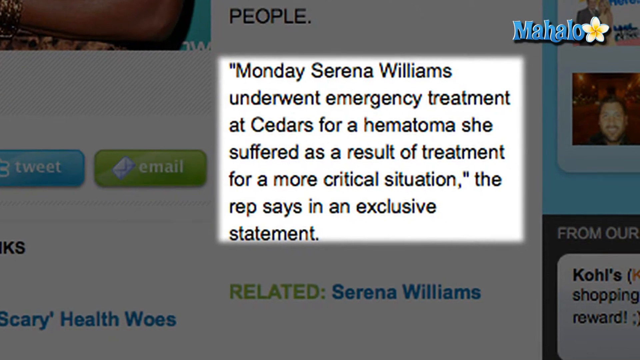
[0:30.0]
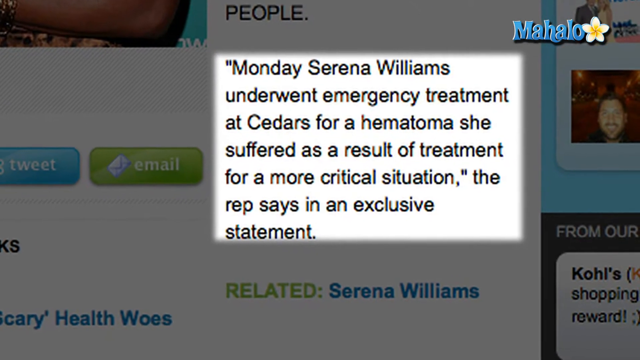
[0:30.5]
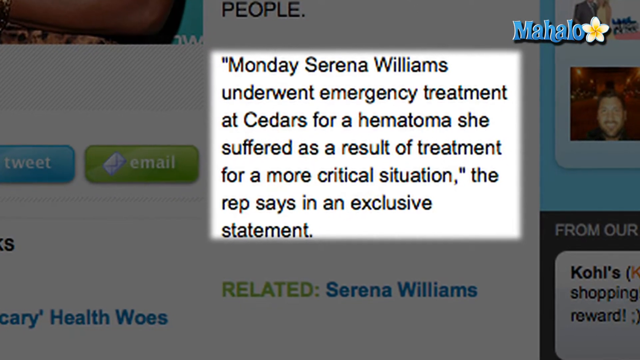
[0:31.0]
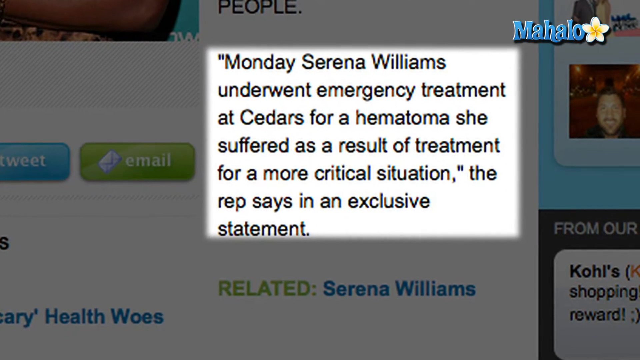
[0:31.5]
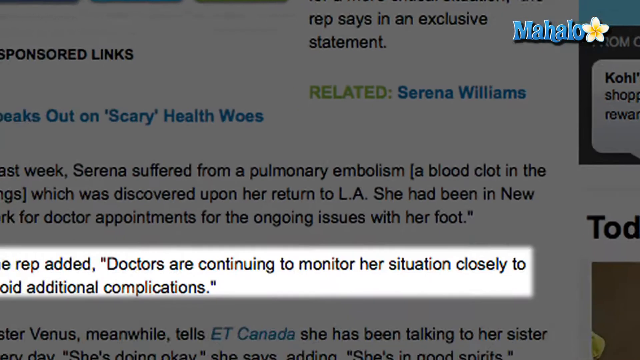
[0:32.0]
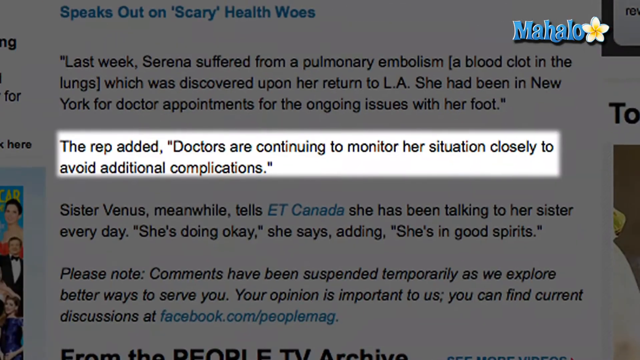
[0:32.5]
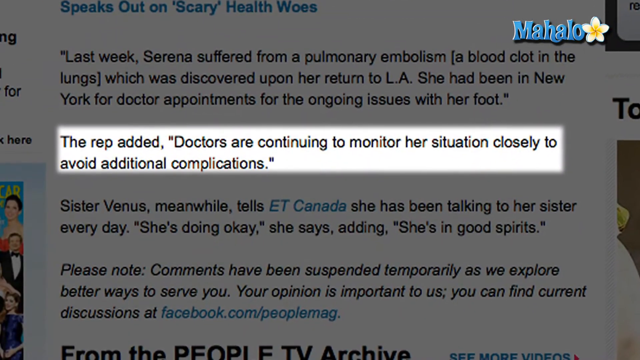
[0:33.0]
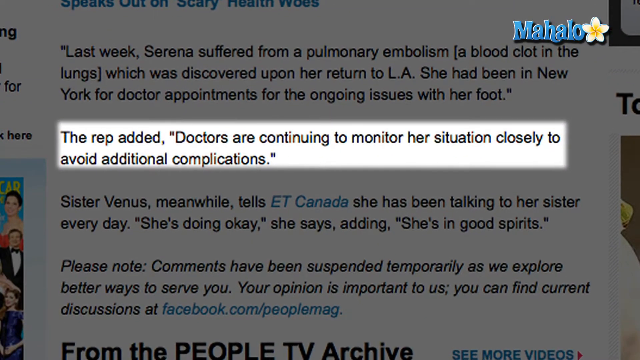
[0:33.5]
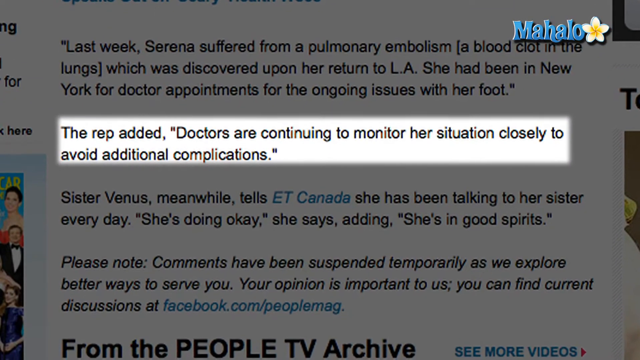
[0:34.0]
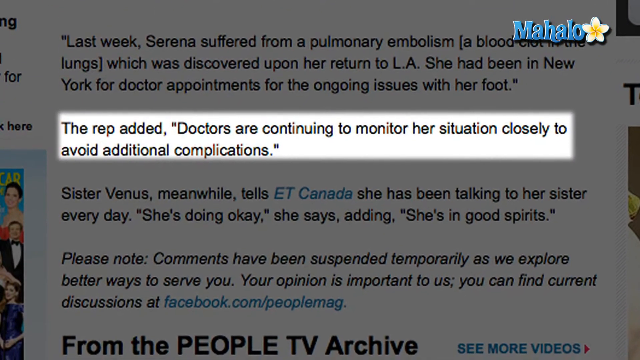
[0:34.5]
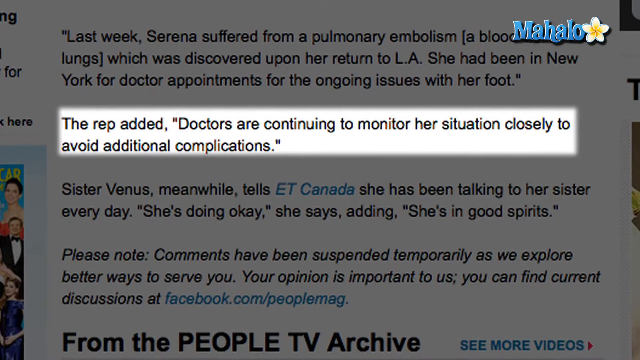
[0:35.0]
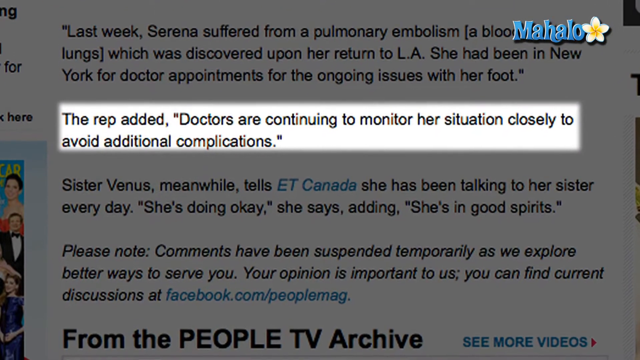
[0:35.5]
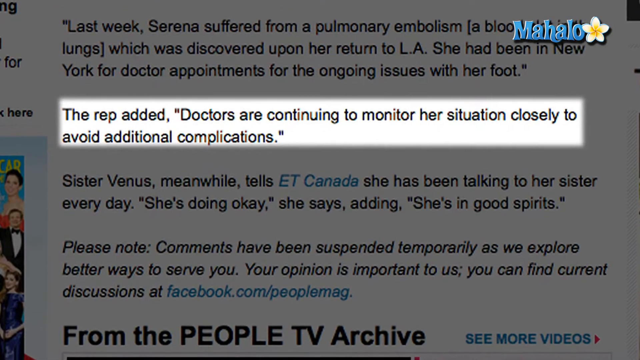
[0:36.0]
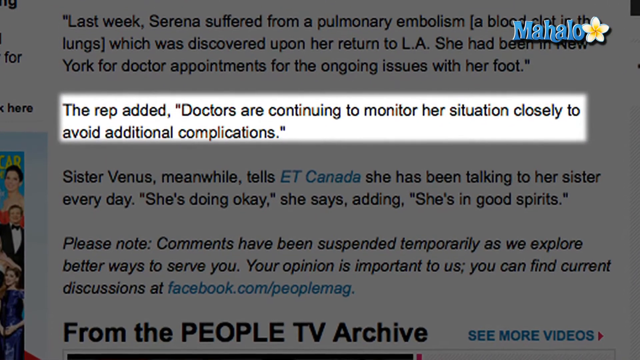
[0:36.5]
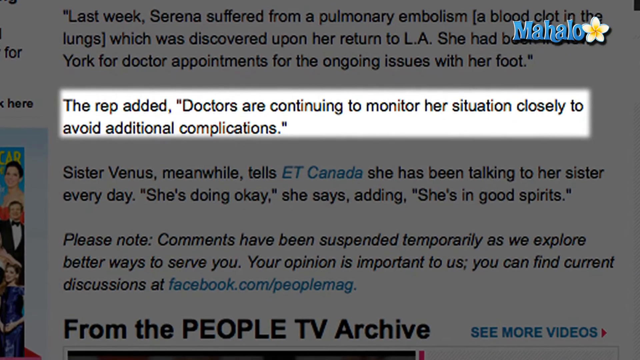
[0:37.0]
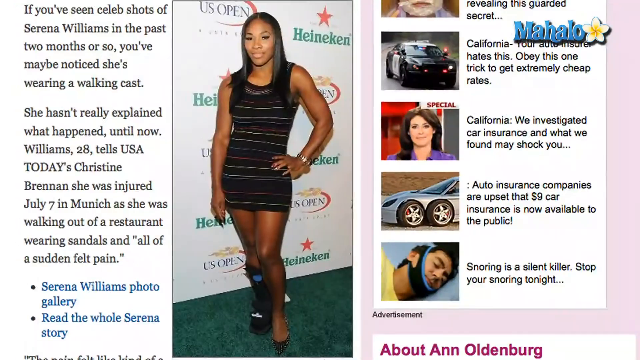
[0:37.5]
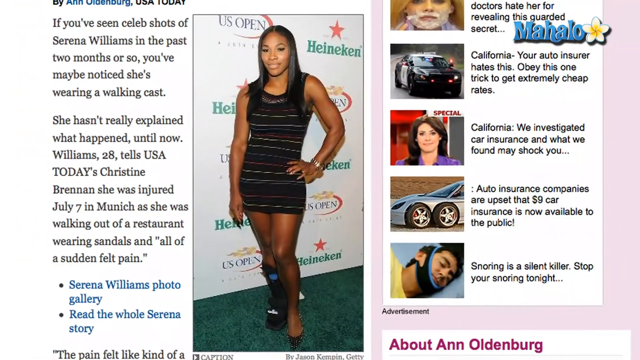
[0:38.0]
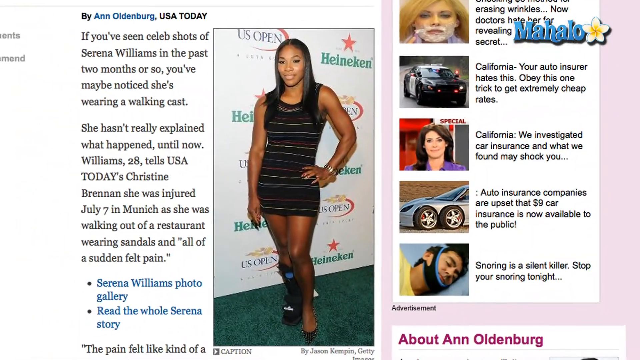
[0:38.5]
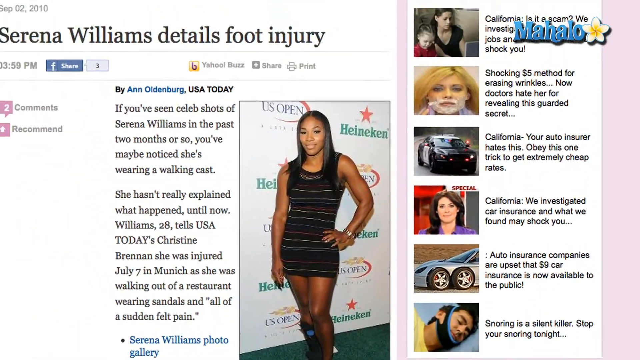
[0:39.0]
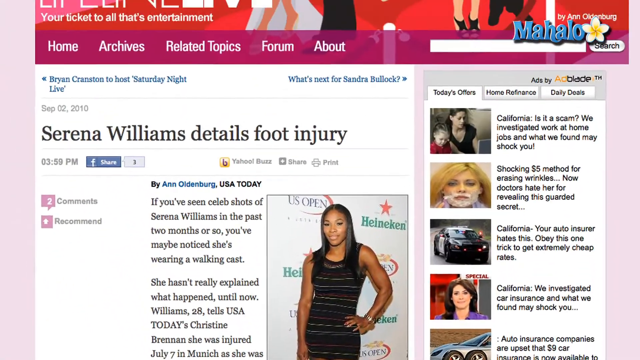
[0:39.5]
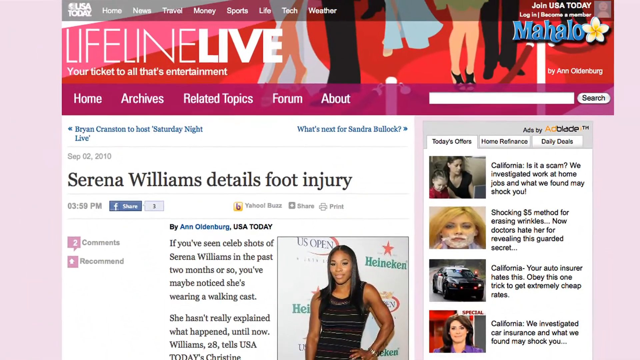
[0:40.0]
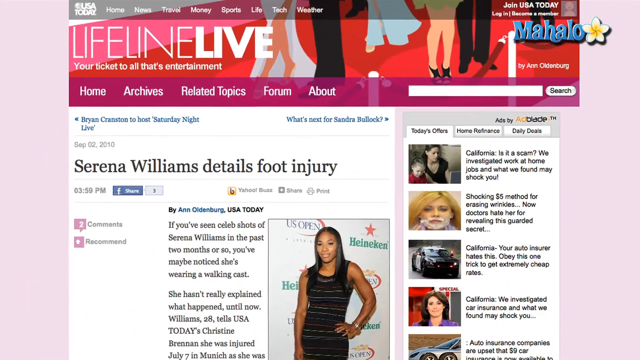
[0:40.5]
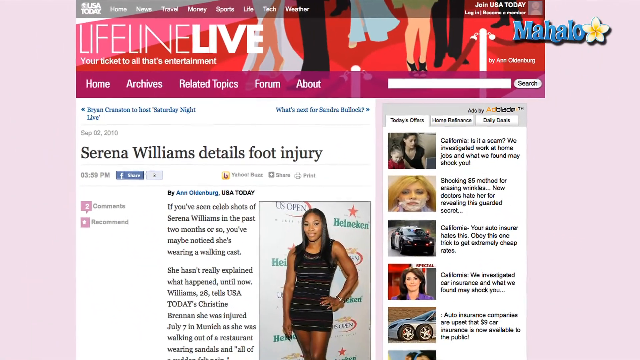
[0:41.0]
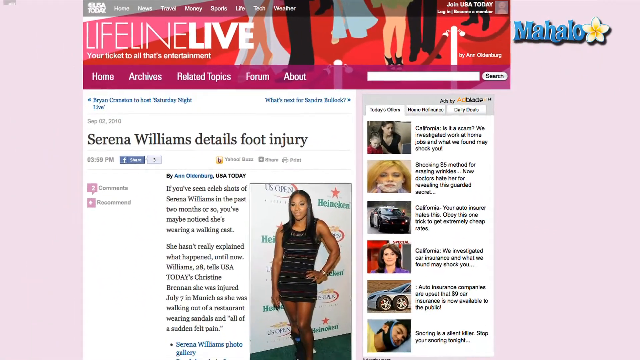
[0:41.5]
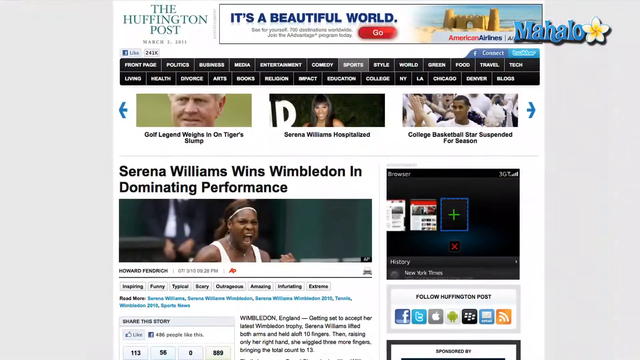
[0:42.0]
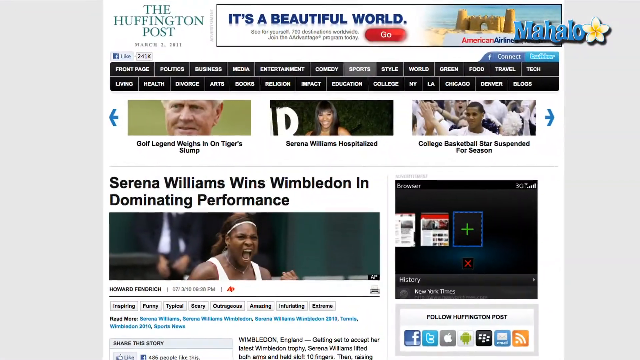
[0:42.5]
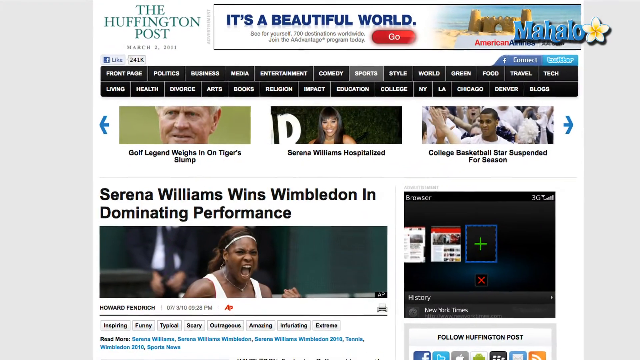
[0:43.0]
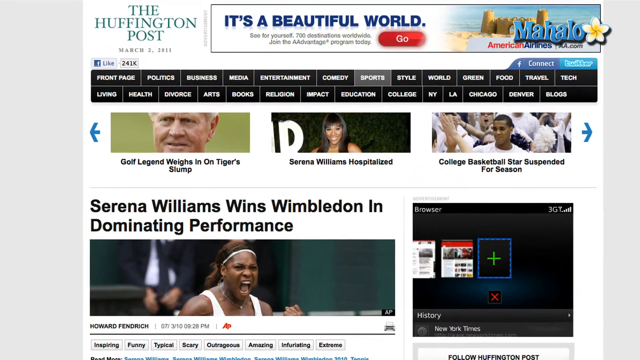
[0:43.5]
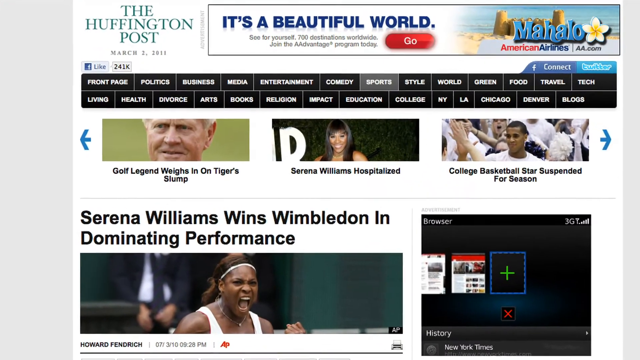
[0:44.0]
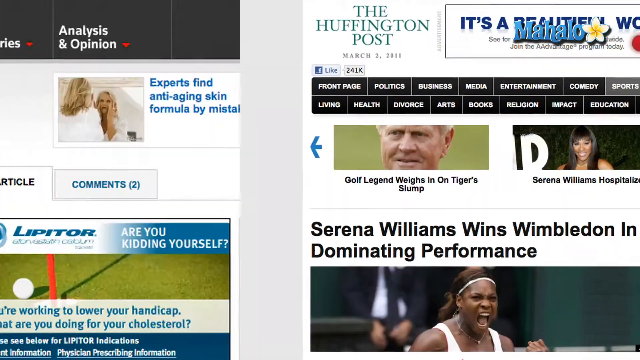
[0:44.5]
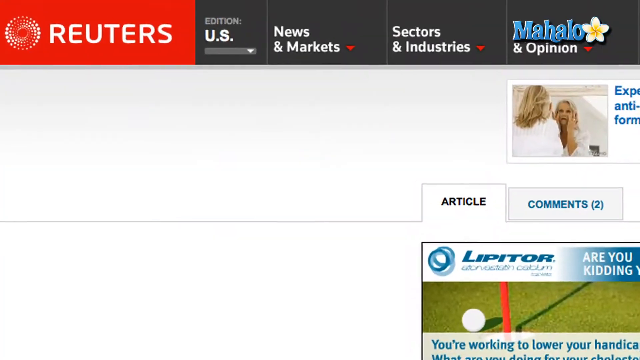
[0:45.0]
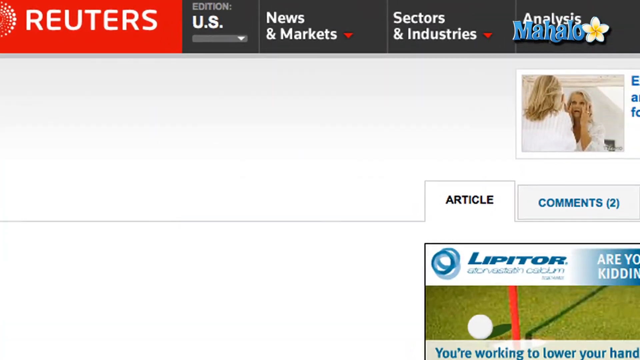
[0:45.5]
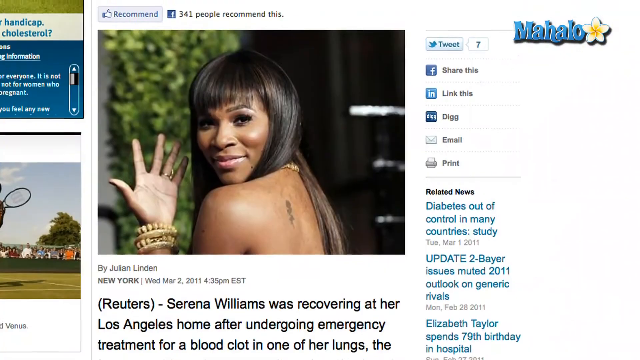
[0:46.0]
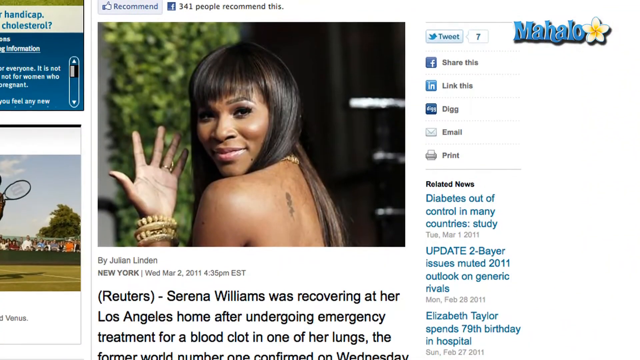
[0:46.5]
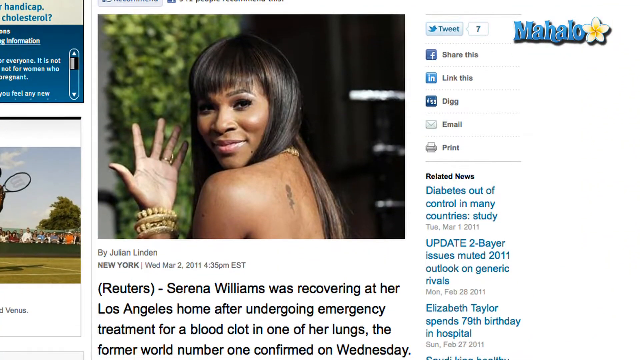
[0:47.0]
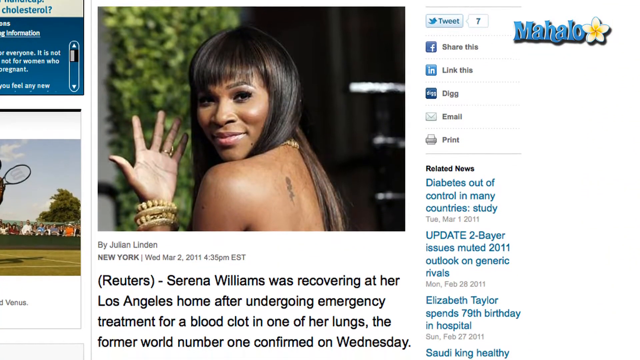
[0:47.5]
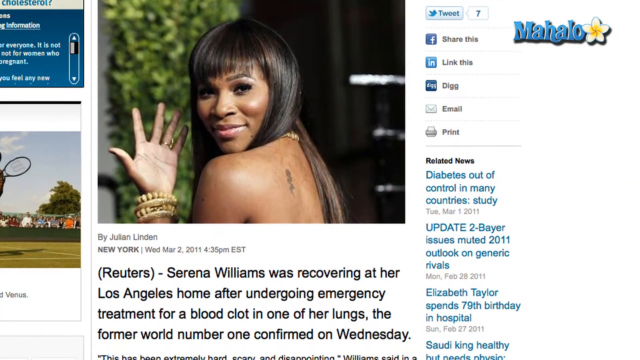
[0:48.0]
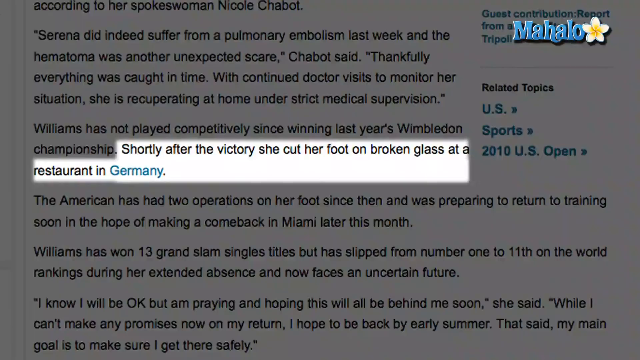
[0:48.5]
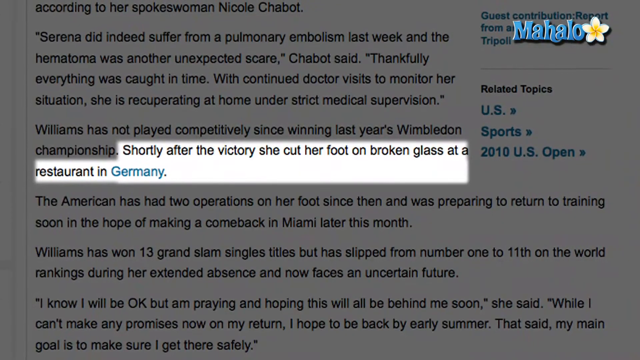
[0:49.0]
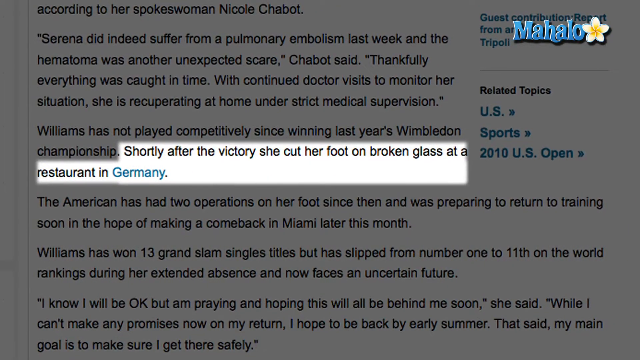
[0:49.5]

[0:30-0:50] The Mahalo article about a pulmonary embolism by Jennifer Garcia continues. It reads: "last week Serena suffered from a pulmonary embolism, a blood clot in the lungs, which was discovered upon her return to LA. She had been in New York for doctor appointments for the ongoing issues with her foot. The representative added doctors are continuing to monitor her situation very closely to avoid additional complications." It then reads: "Sister Venus, meanwhile, tells ET Canada she has been talking to her sister every day. She's doing okay, she says, adding she's in good spirits." A notice follows: "Please note, comments have been suspended temporarily as we explore better ways to serve you. Your opinion matters to us and is important. You can find discussions at People Magazine."